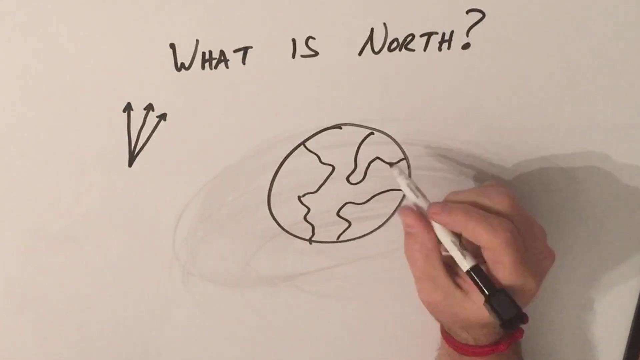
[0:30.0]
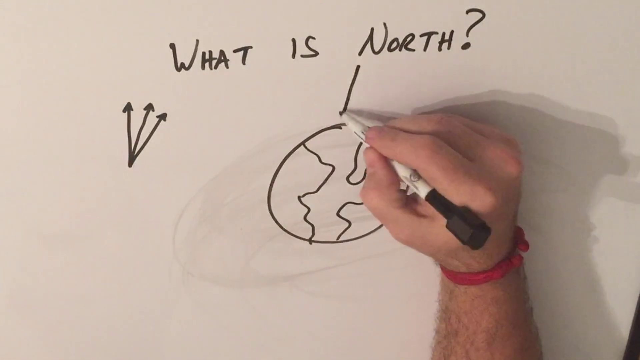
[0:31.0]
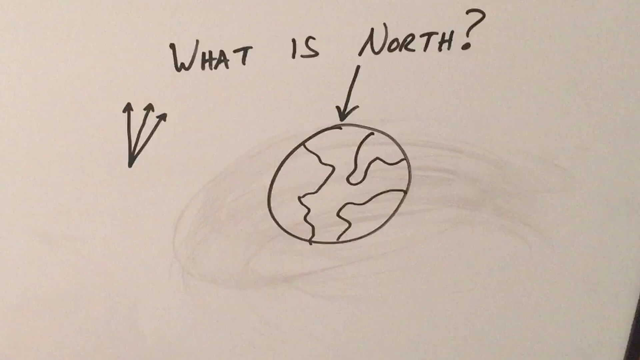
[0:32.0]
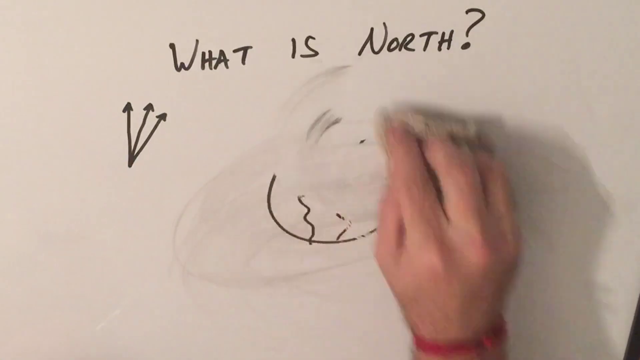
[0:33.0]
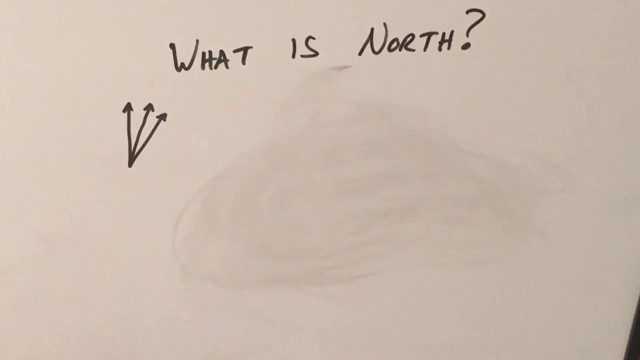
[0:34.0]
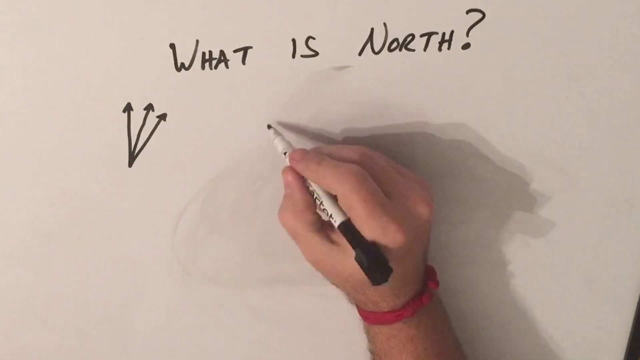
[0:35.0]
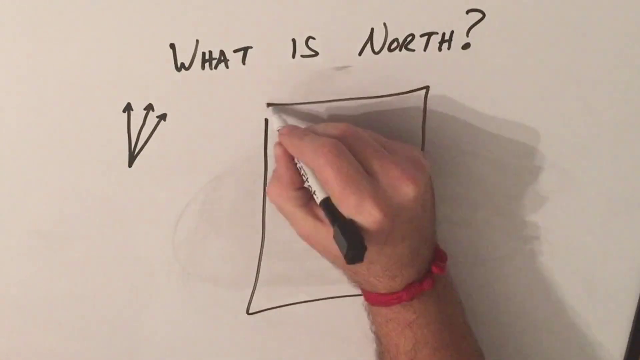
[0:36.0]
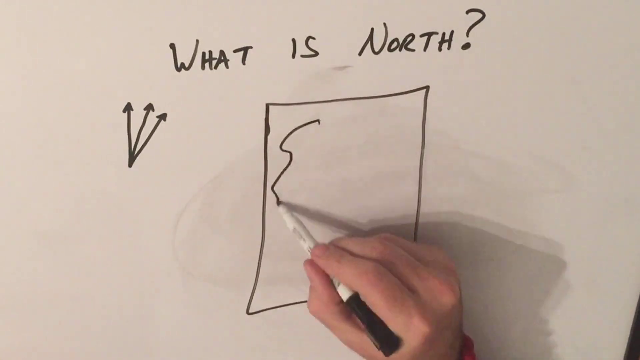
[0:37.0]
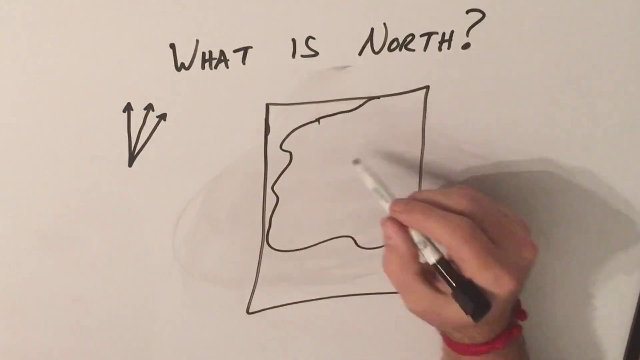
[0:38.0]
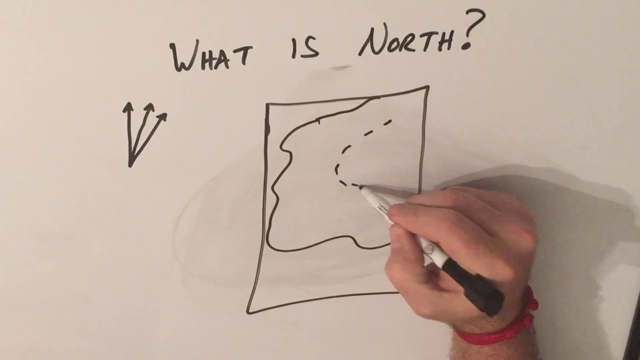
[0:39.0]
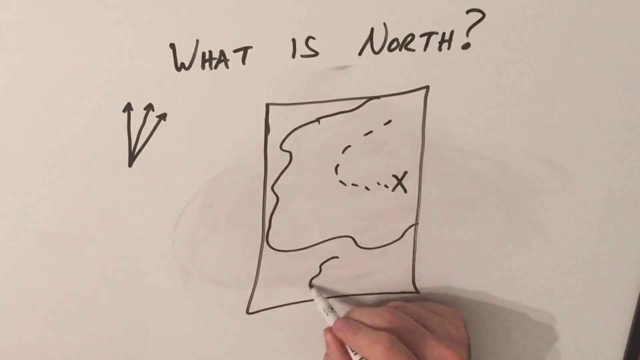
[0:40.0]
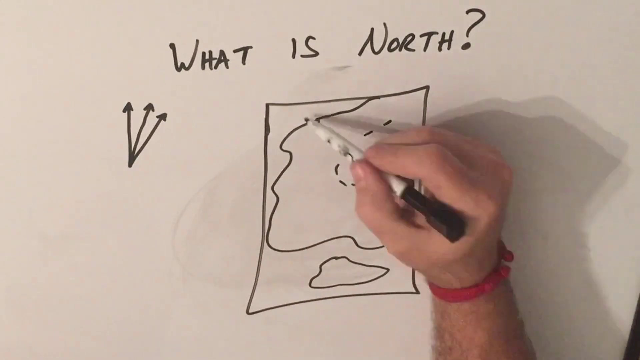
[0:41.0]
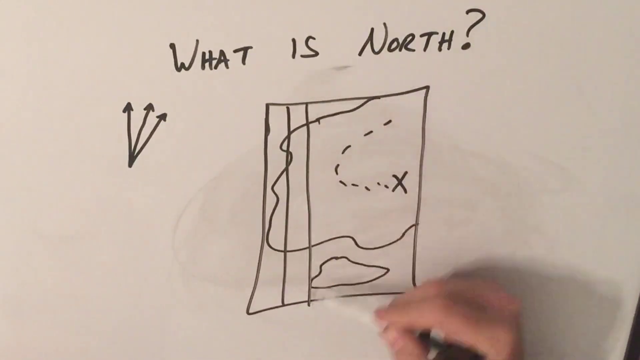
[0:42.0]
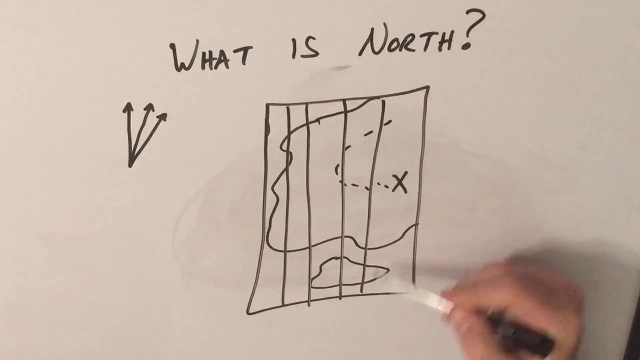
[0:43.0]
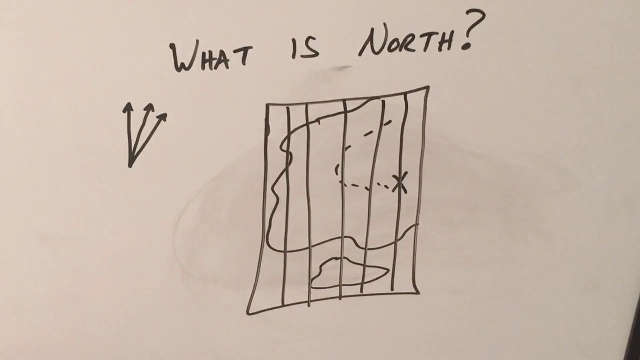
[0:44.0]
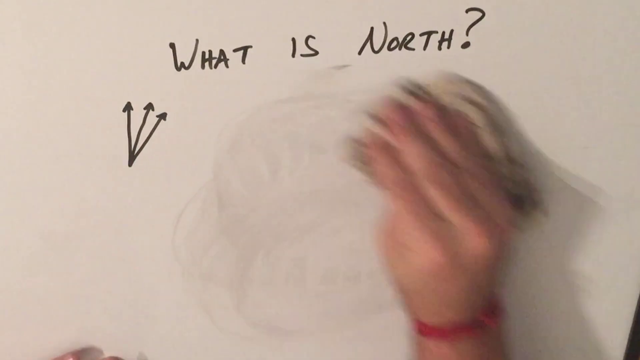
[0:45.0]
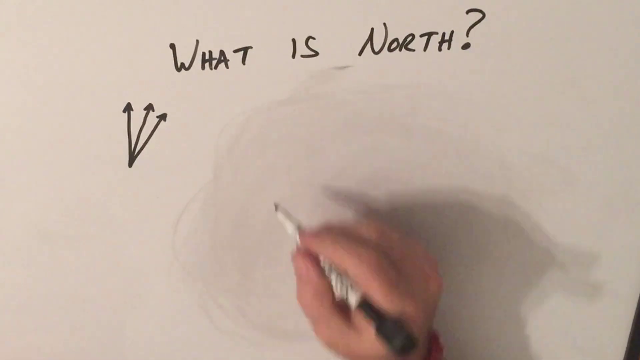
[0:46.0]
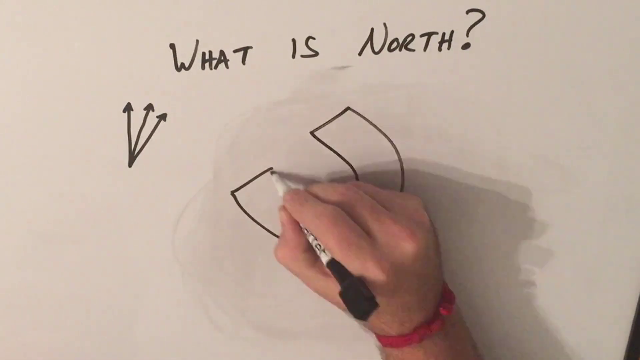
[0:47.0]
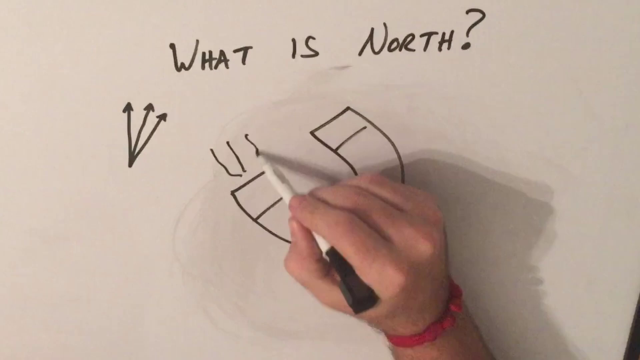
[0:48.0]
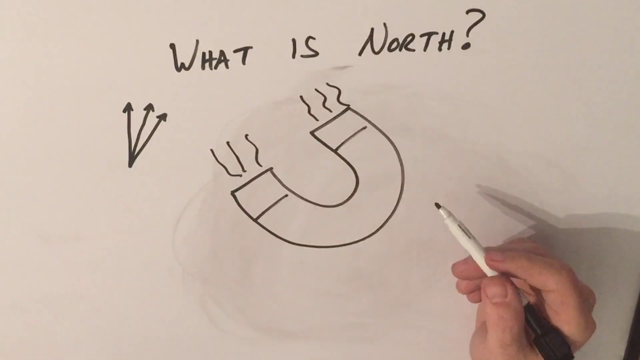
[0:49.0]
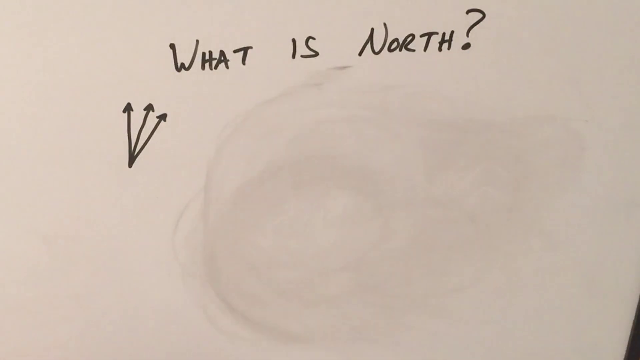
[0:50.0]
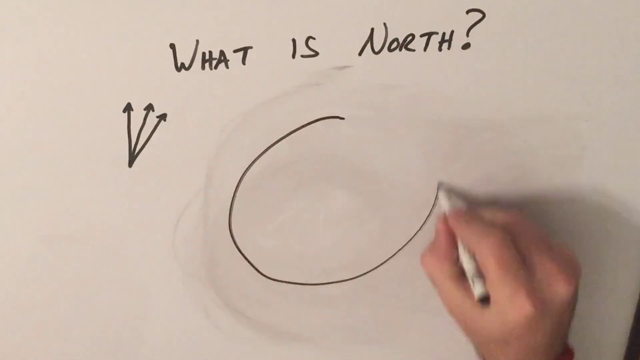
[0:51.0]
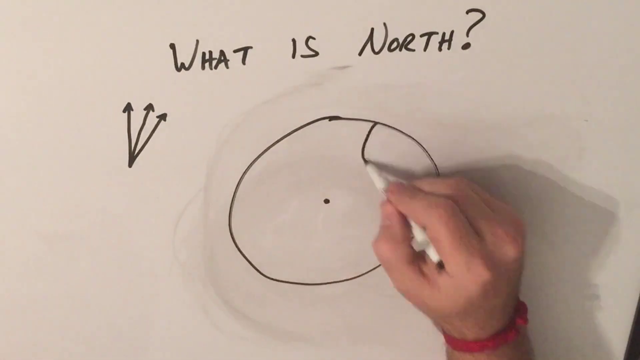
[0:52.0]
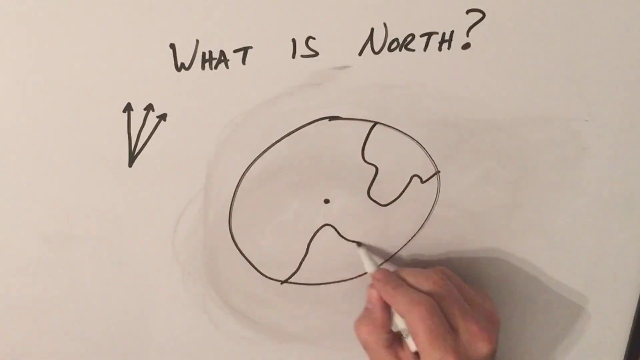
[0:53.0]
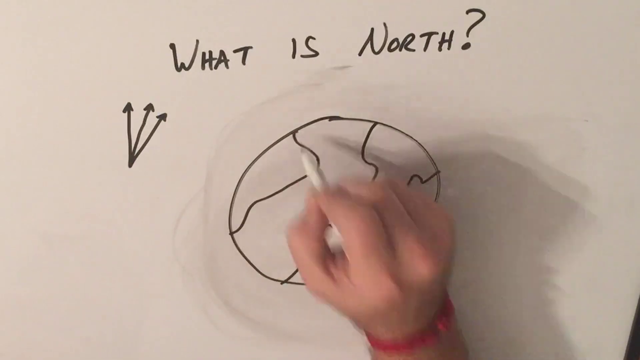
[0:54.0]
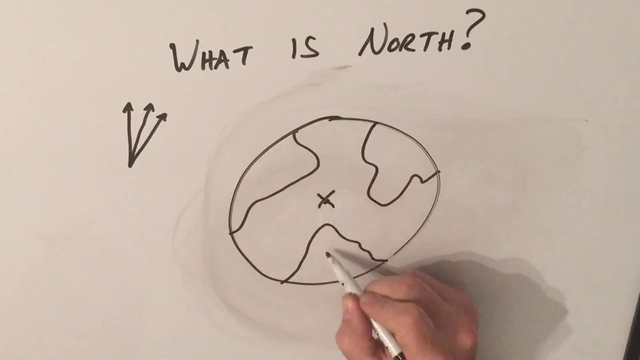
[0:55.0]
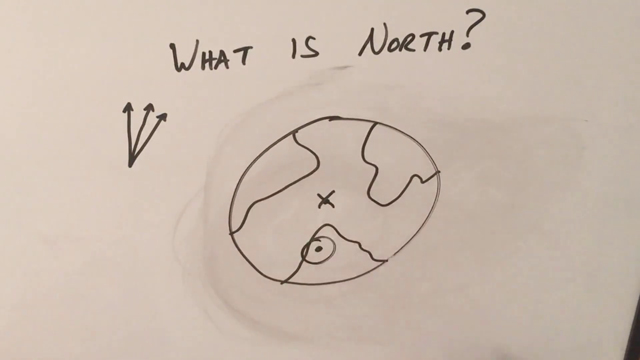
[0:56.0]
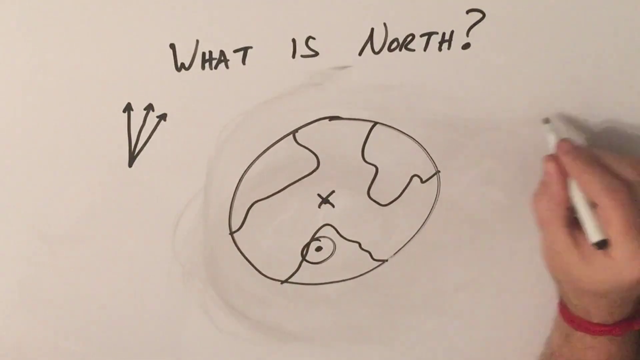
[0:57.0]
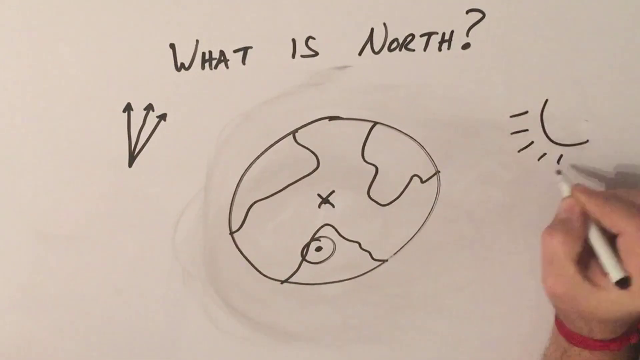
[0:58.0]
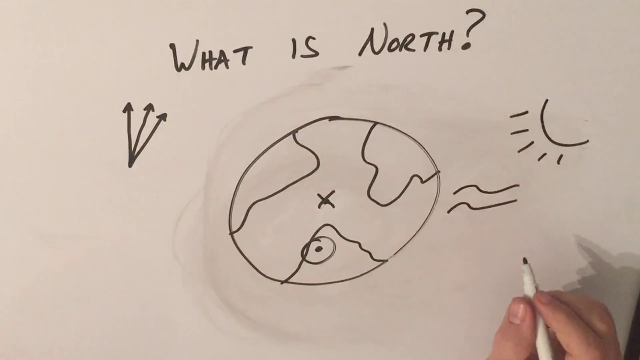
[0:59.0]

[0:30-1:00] Against a white background, "what is north" is written in black whiteboard marker at the top of the screen, with three arrows pointing up below it. There is a circle with some continents drawn on it that looks like it represents Earth, and an arrow points to the top of this circle. A hand erases the globe and the arrow, then draws a black rectangle with the short side at the top and the long sides on the right and left. The hand fills it in with kind of a map: a squiggle that goes around almost in a circle, sort of encompassing the right side of the paper, and what looks like an island underneath it. The hand then draws five vertical grid lines. That image is erased, and the hand draws a sort of horseshoe-shaped object that looks like a magnet, with some wavy lines at its two ends. That is erased too, and the hand draws another circle with a dot in the middle and sort of some continents around it. An X goes through the middle dot, and a dot with a circle around it is placed on one of the continents toward the bottom of the frame. Last, the hand draws what looks like a sun with rays coming off it, and some squiggly lines to the right of the planet.